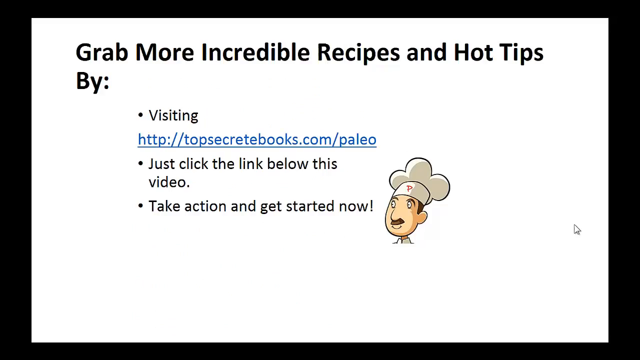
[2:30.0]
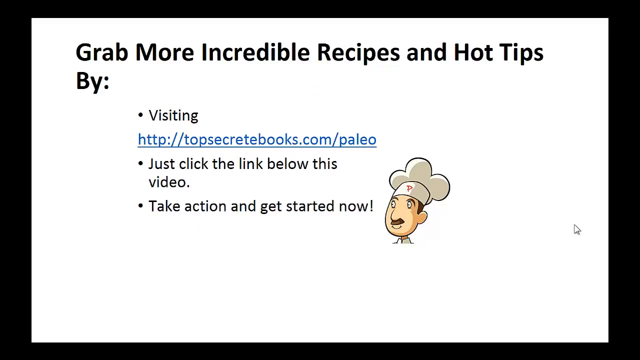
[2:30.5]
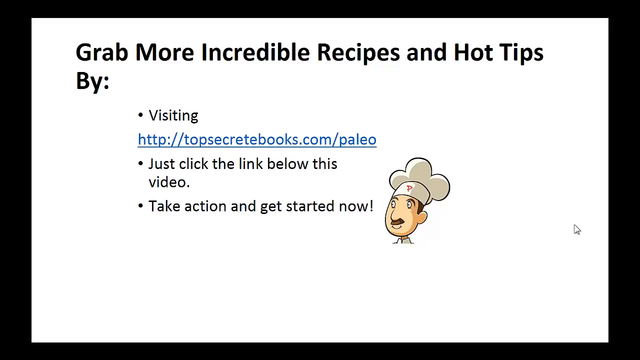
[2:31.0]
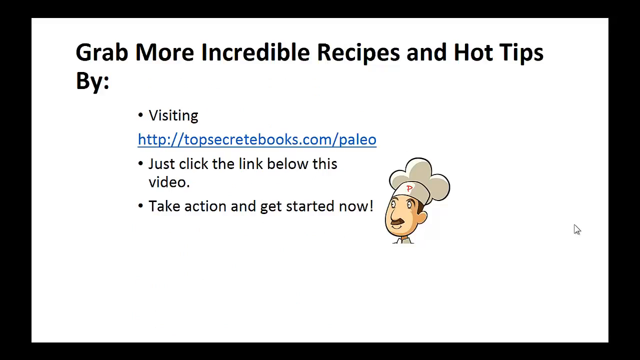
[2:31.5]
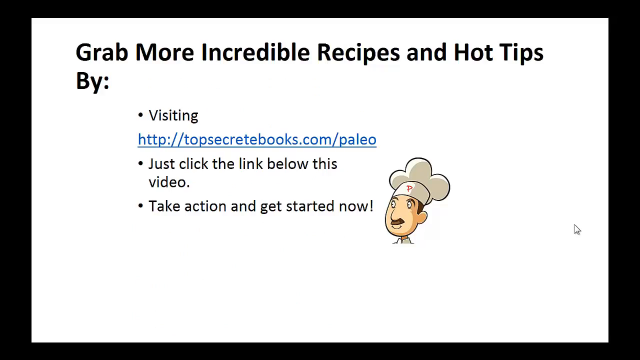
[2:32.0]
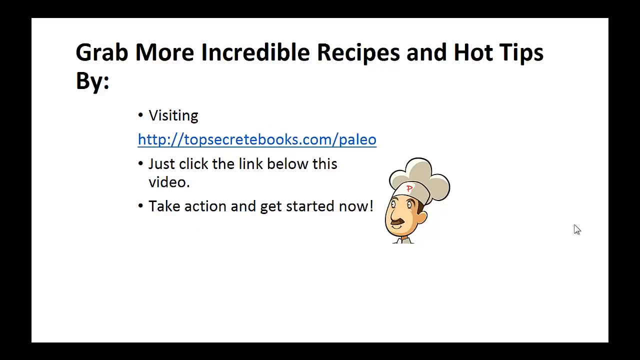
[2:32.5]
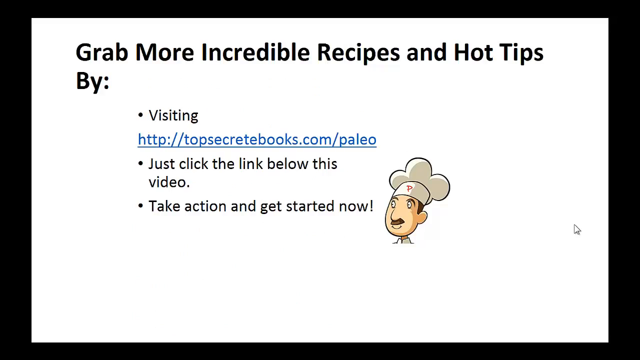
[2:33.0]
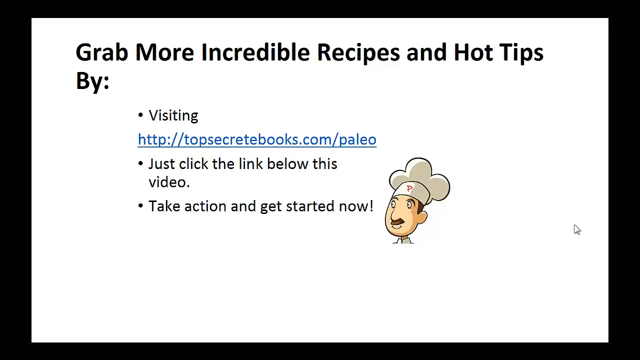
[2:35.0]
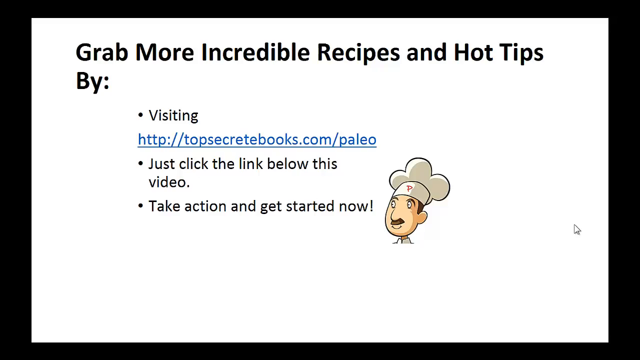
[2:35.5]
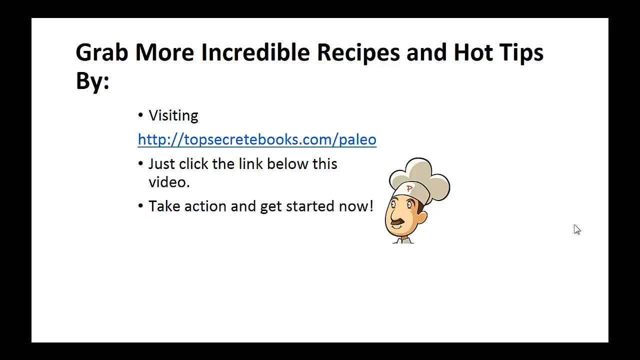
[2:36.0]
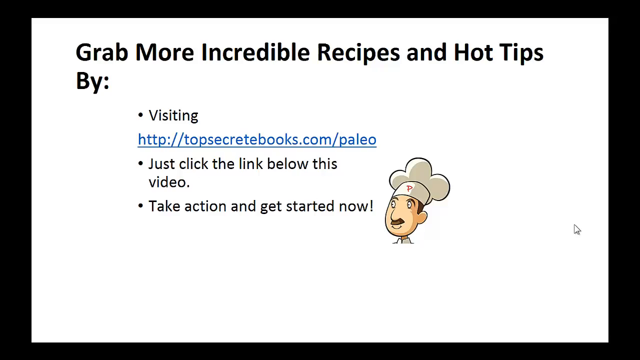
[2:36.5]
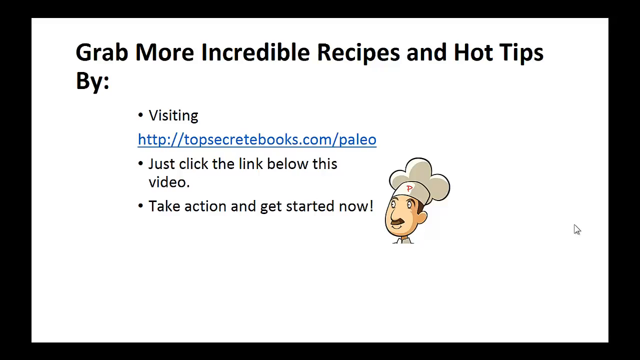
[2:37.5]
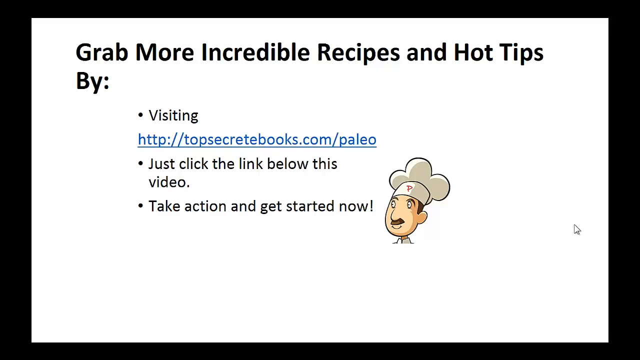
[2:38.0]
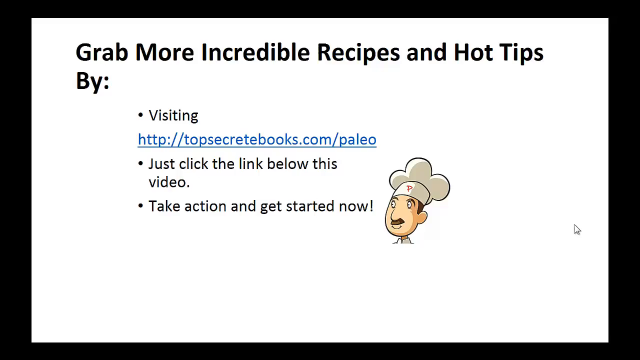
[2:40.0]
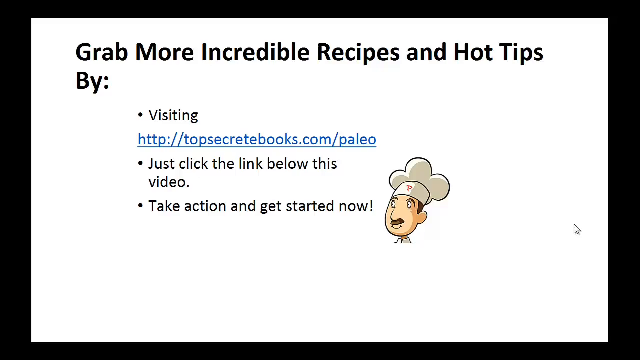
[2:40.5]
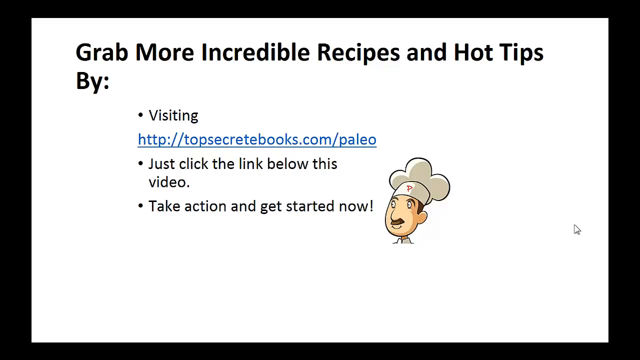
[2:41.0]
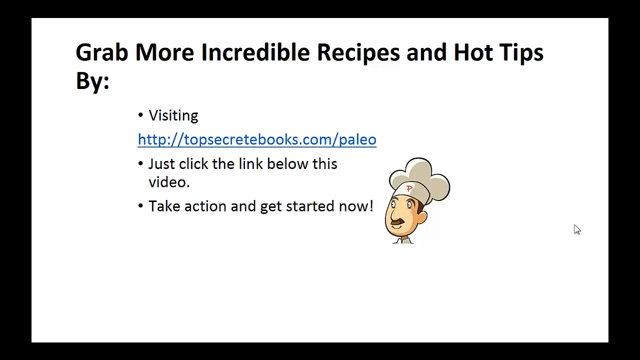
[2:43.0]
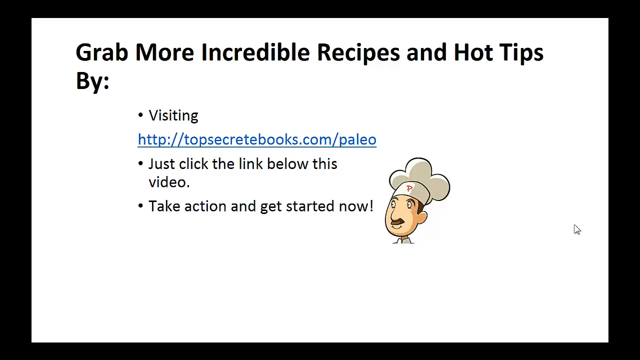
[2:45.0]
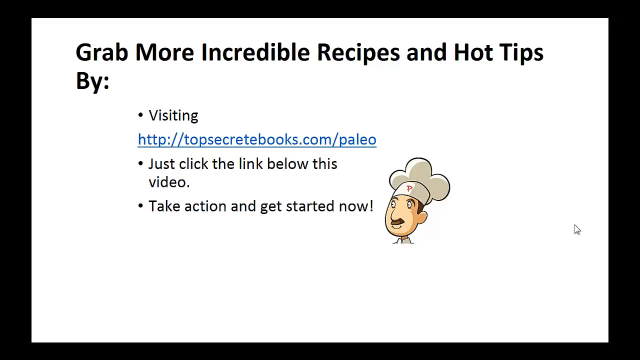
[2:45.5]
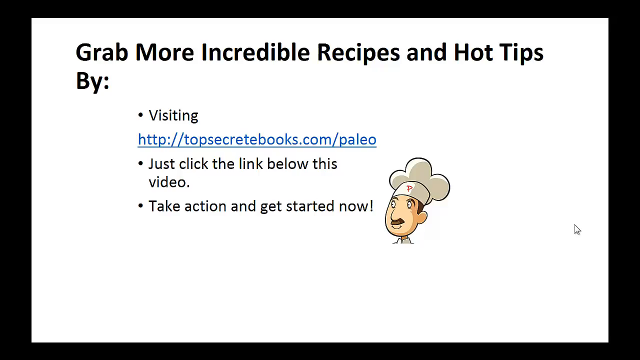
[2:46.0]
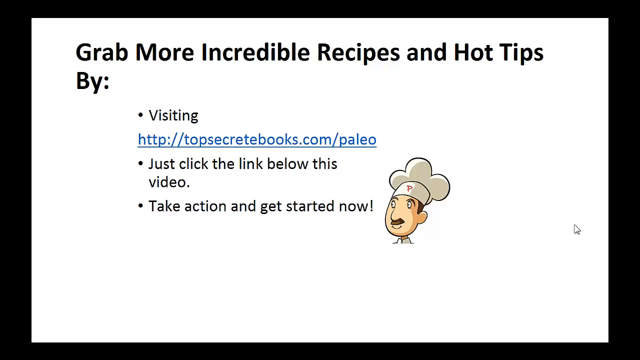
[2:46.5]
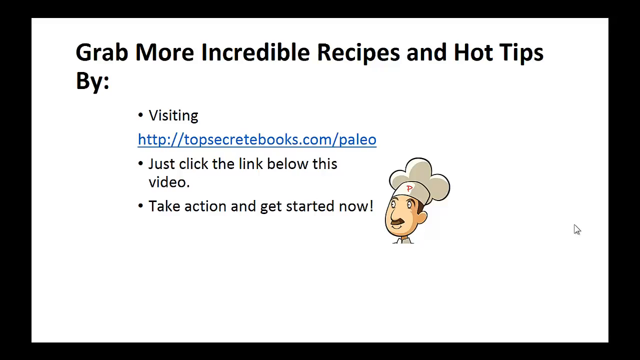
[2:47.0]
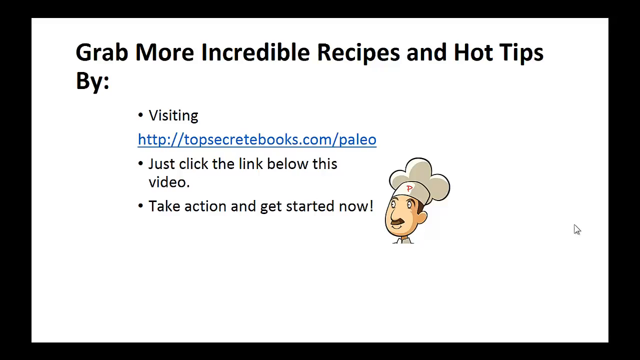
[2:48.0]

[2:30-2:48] The video shows text in black bold words beginning "great more incredible", followed by a colon. Below it is the word "visiting", and under that is a link in blue reading "http://" followed by "top secret box.com/paleo", apparently the creators' website. Further text reads "click the link below this video take action and get started now". The background is white, and a cartoon of a man who looks like a chef, wearing a chef's hat, is visible.